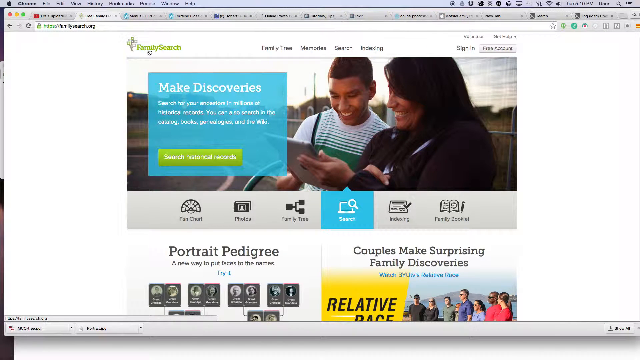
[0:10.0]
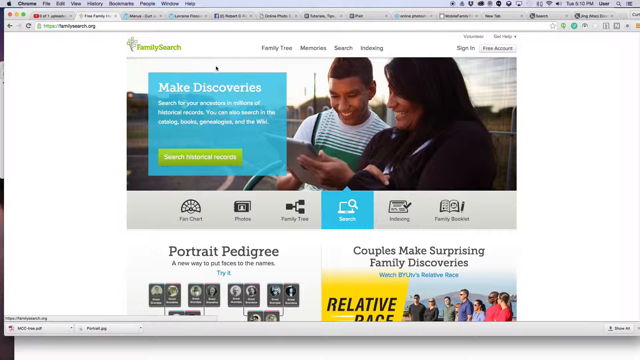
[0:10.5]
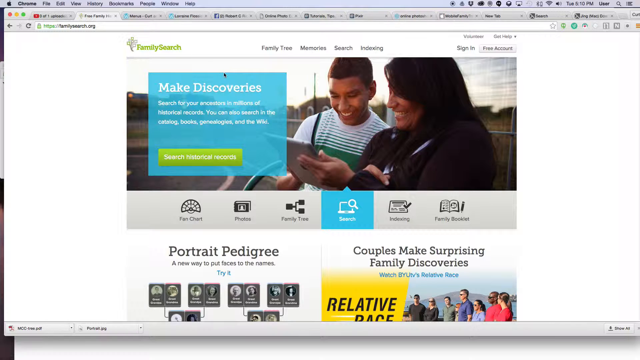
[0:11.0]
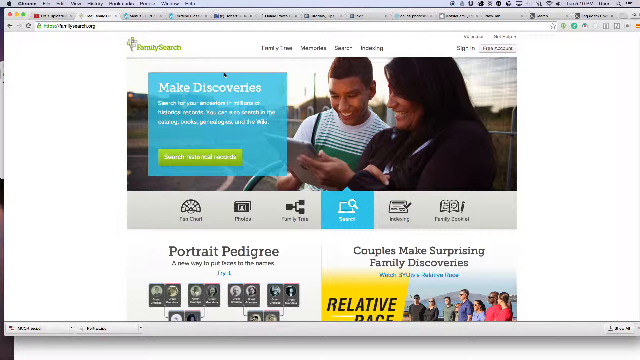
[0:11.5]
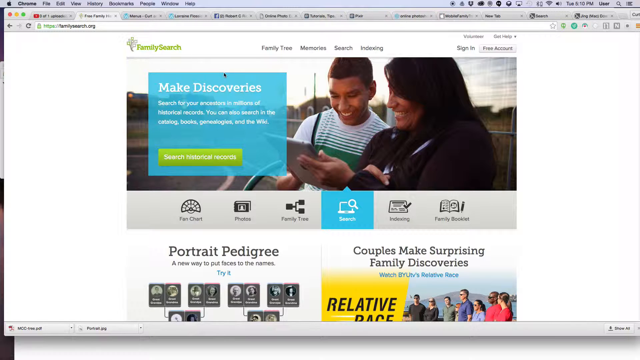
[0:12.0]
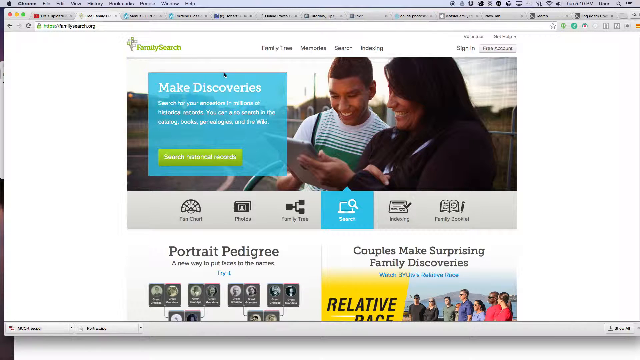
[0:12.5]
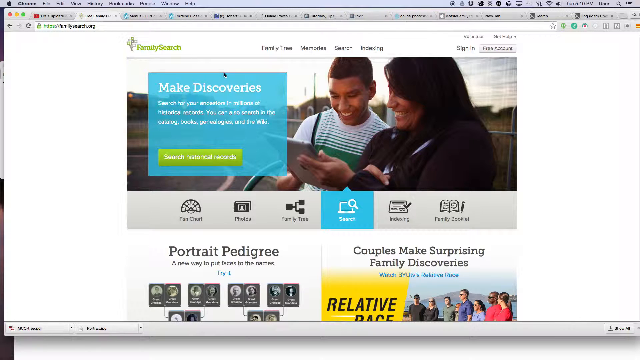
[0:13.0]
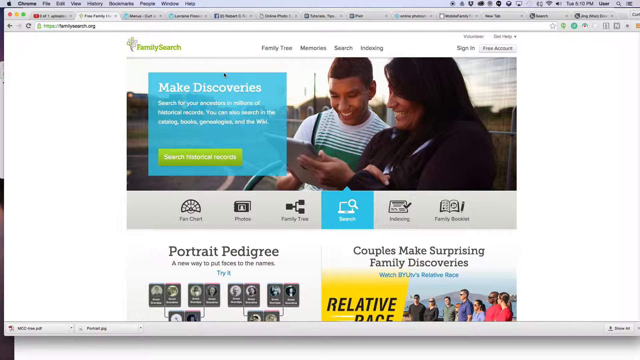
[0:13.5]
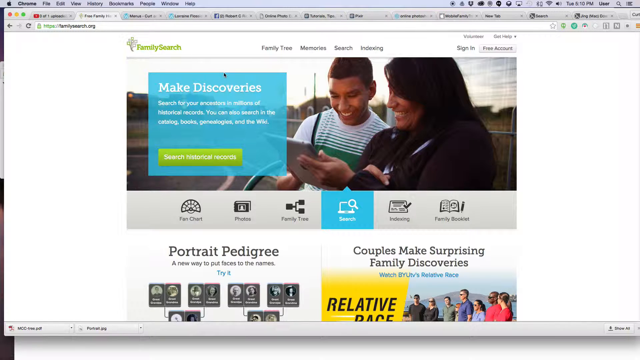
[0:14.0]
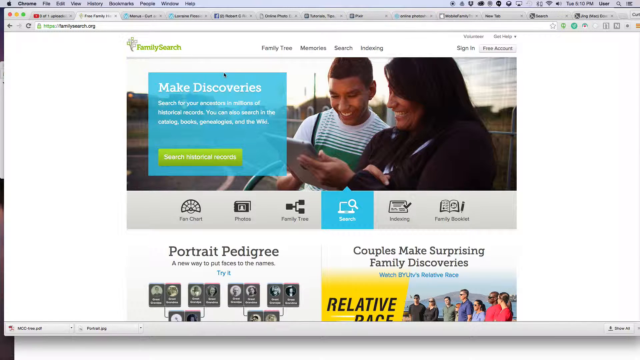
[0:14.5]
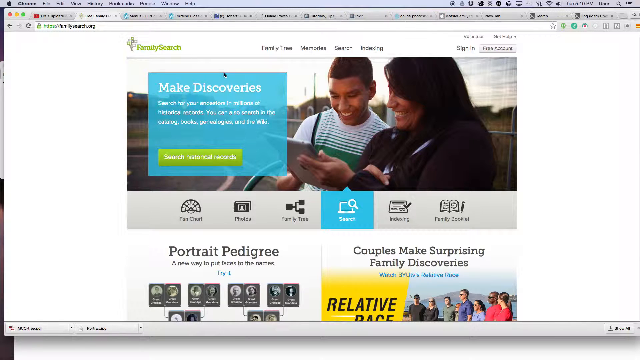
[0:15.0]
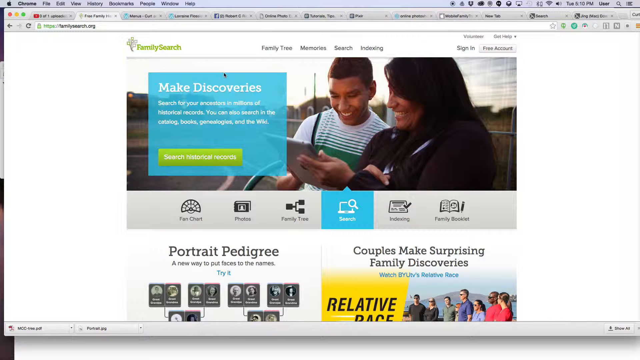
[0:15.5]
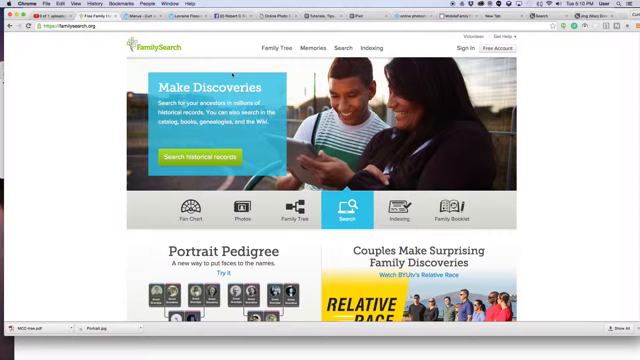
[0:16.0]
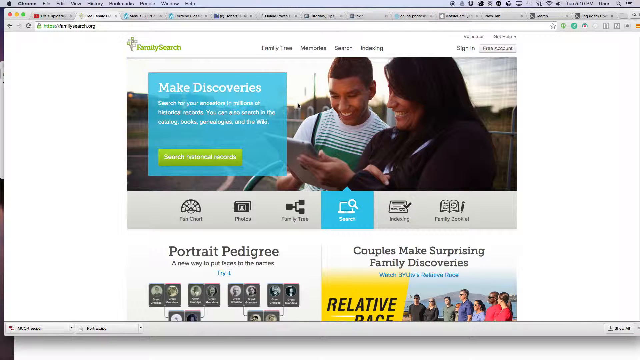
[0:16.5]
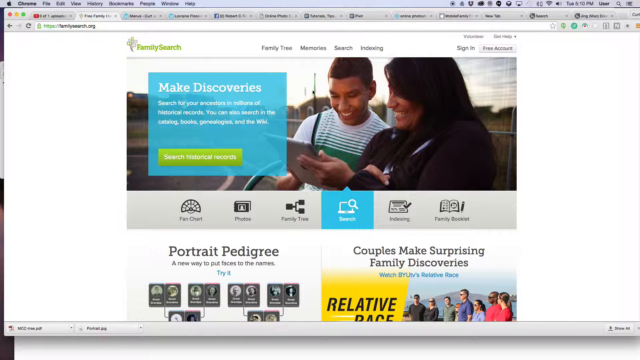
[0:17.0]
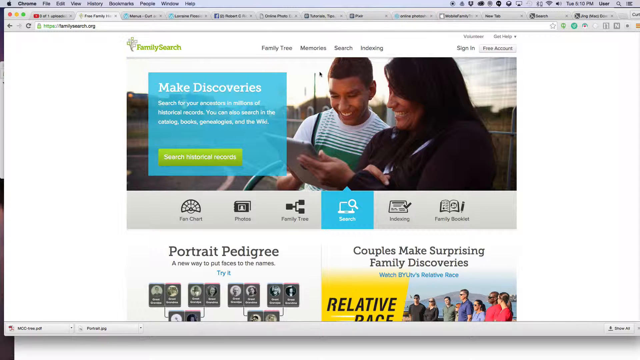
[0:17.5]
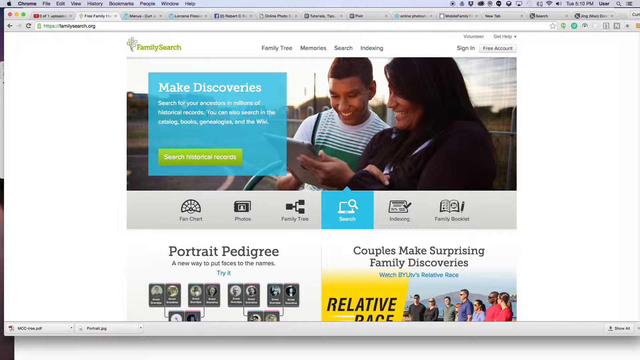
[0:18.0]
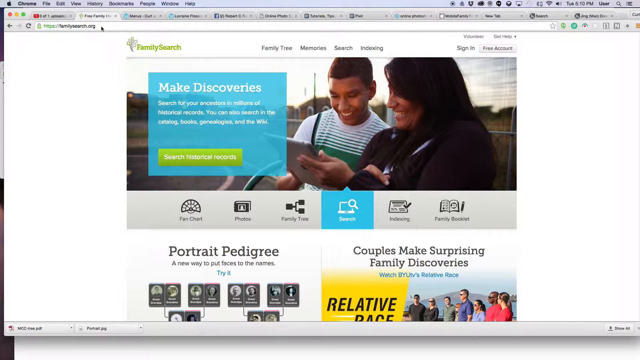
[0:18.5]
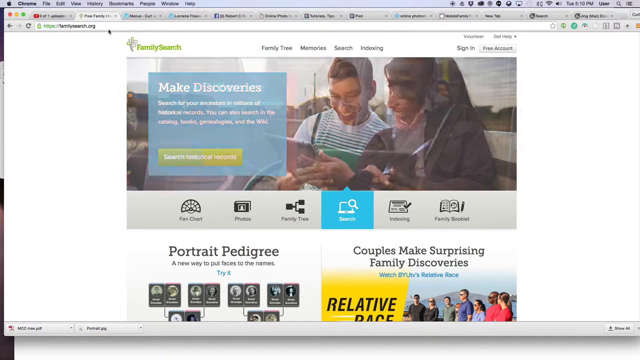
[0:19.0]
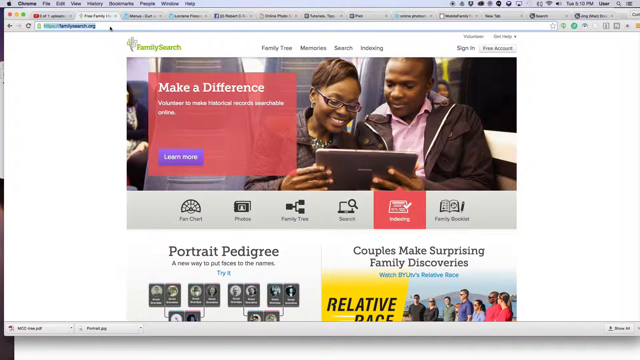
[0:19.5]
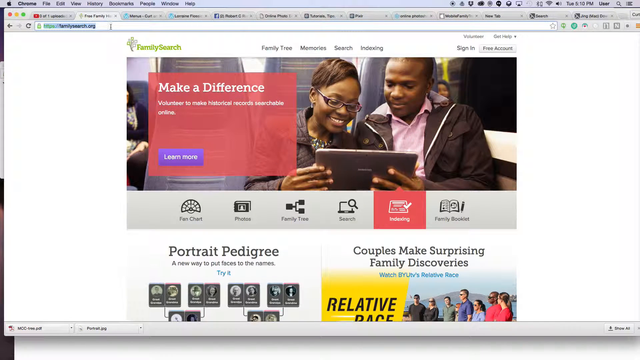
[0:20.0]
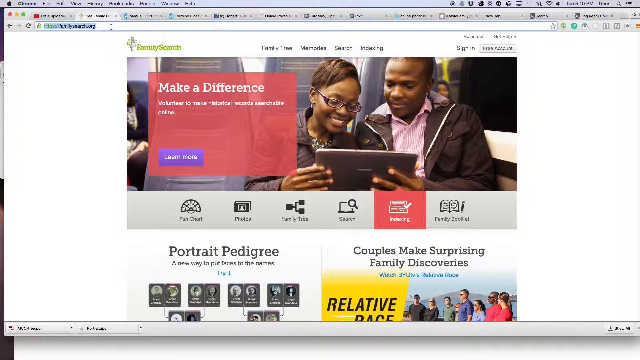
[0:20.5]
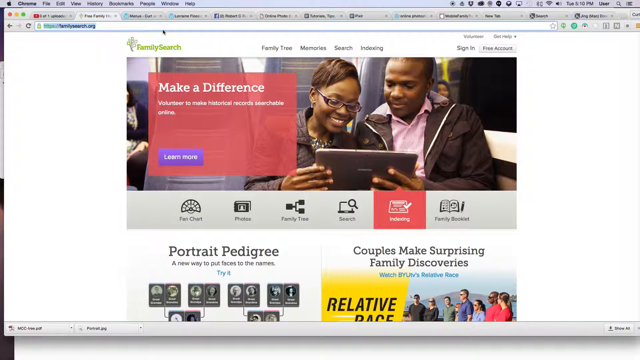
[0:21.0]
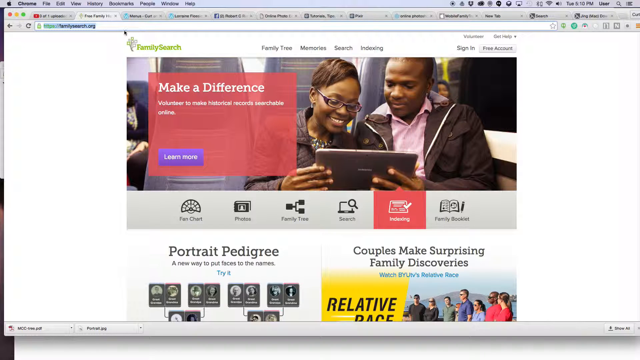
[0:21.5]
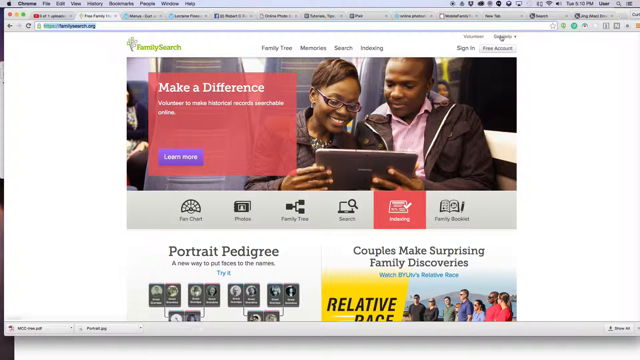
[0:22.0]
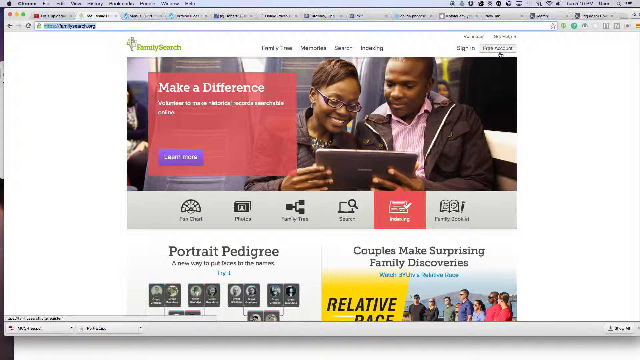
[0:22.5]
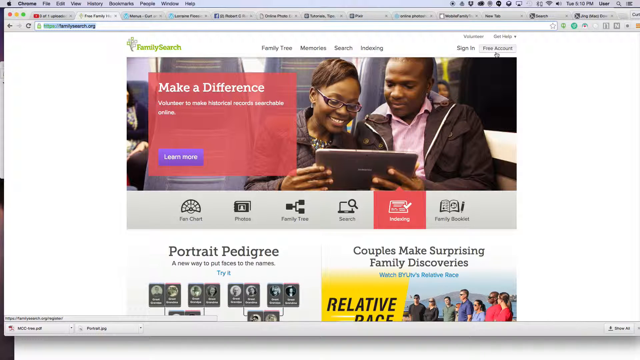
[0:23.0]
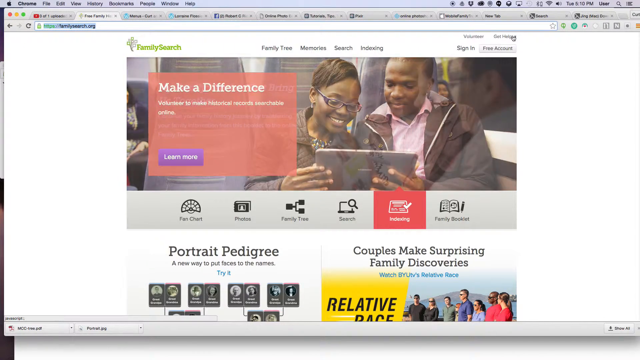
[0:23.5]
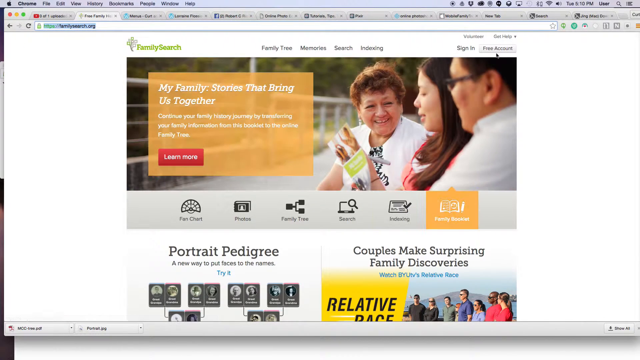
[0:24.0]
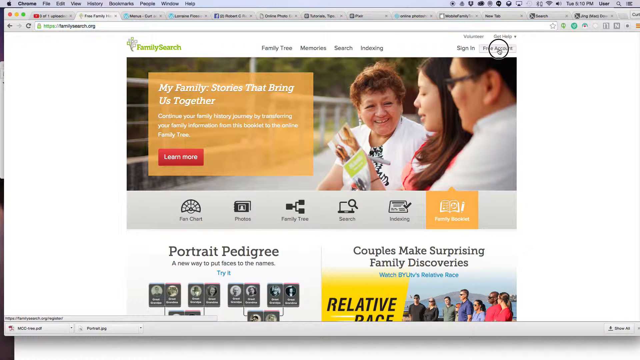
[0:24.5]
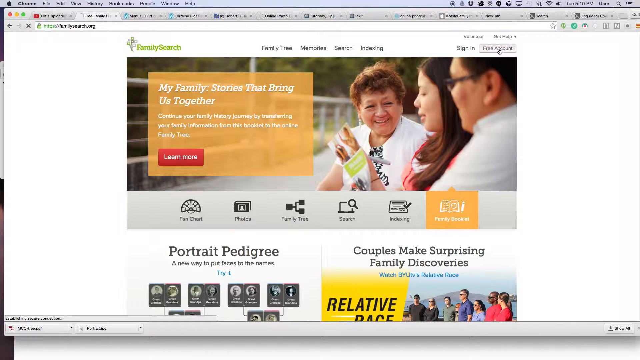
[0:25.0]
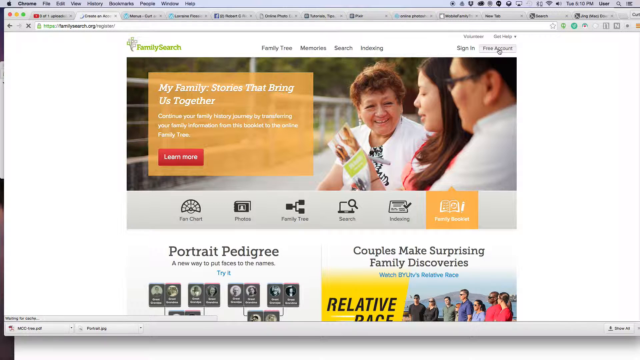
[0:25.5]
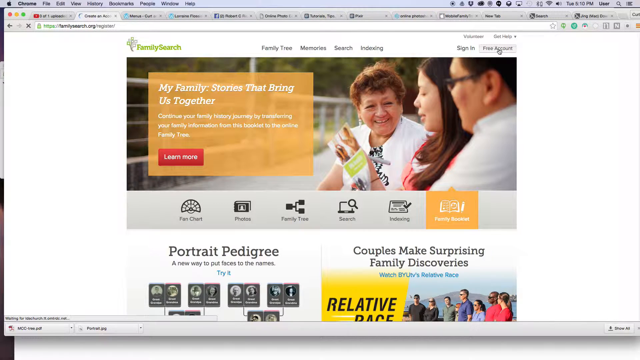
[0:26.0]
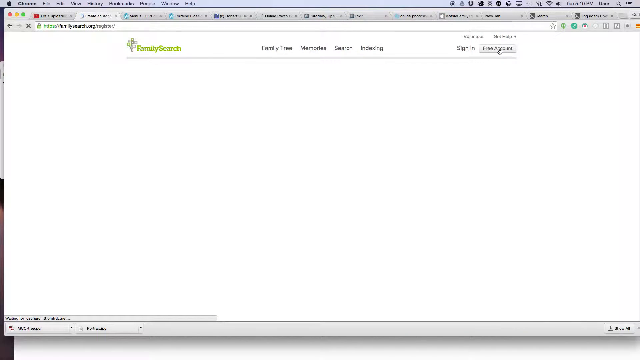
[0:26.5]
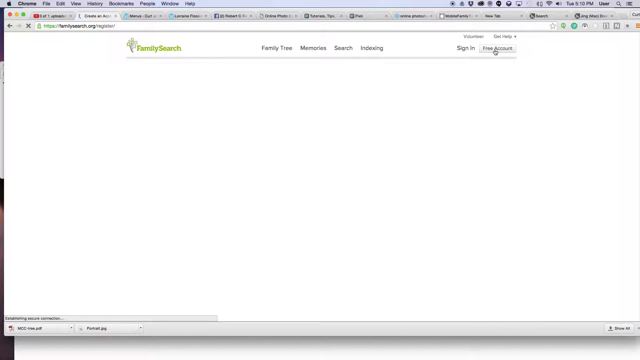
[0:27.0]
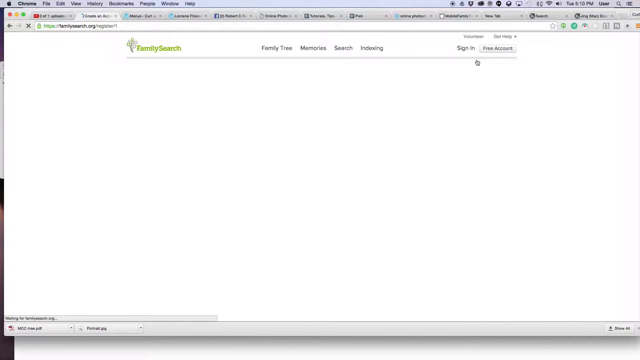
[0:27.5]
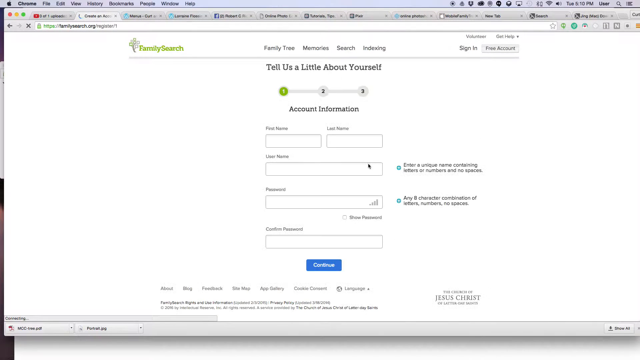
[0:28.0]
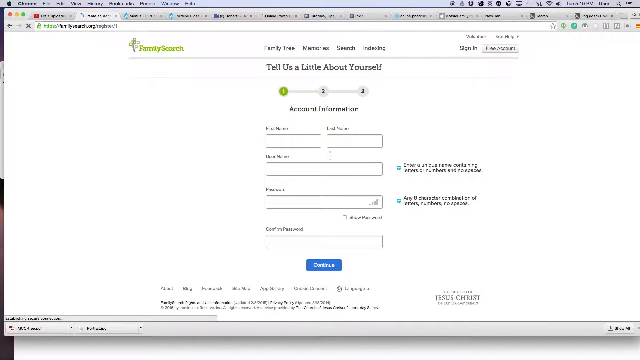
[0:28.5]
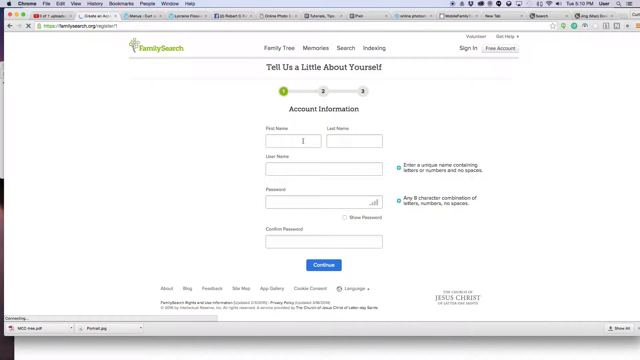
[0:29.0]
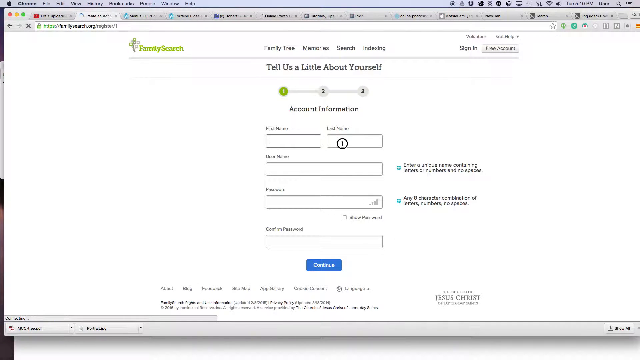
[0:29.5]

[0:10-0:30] The user moves a black mouse cursor around a little while a scrolling set of pictures plays on the front page. One picture features a mom and her son: the mom holds an iPad with her left hand sort of stretched out toward her son while her other hand is sort of held up against her body, and the son sort of looks down at the iPad with a big smile, his teeth visible. The image changes to a very similar scene featuring a mom and her daughter, or possibly a grandma and her daughter, also sharing the iPad; the woman on the left uses her right hand, the other uses her left hand, and the woman on the left wears glasses. Below is a pink square that says "make a difference". Another smiling lady then appears as the user clicks the free account option, and the page changes to one reading "tell us a little bit about yourself" in the center.